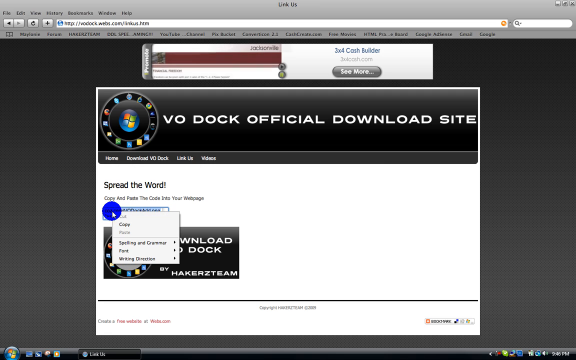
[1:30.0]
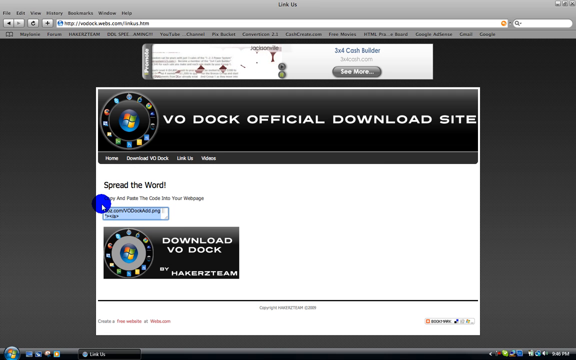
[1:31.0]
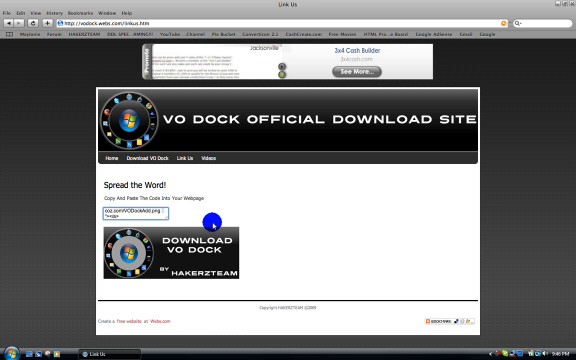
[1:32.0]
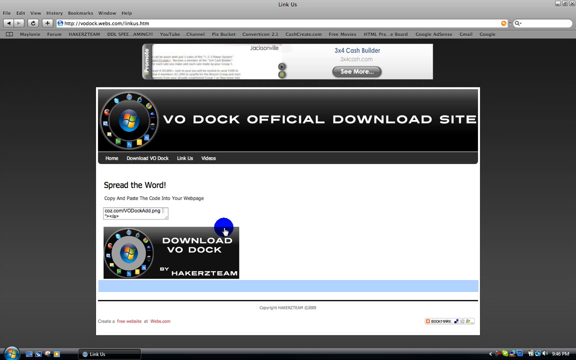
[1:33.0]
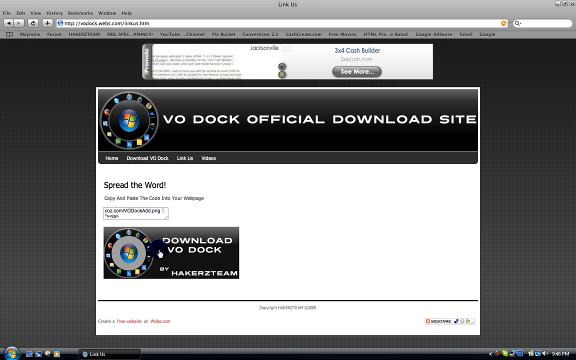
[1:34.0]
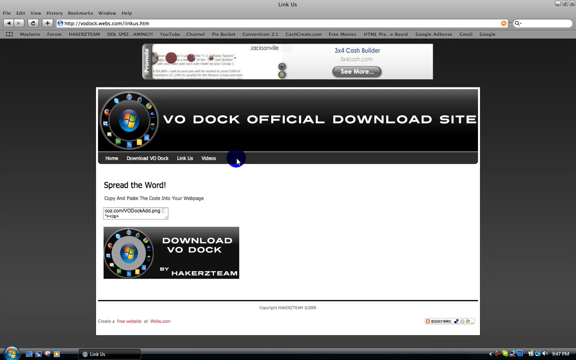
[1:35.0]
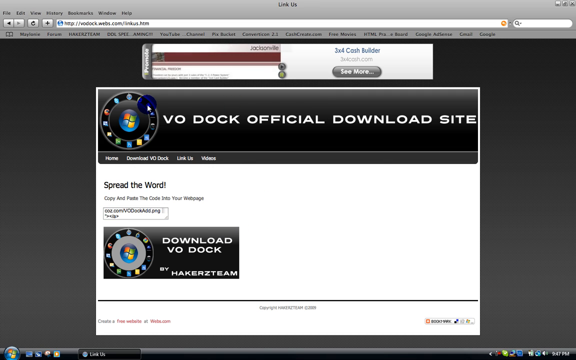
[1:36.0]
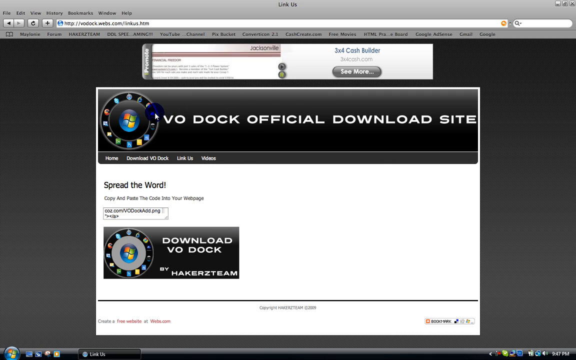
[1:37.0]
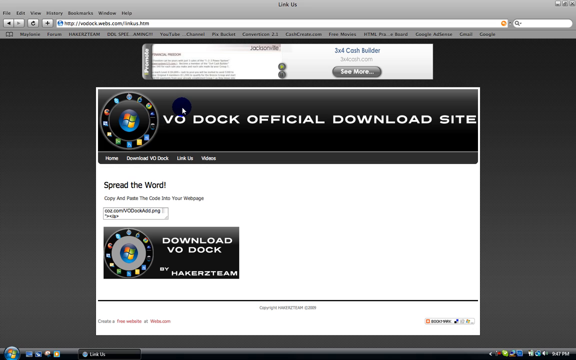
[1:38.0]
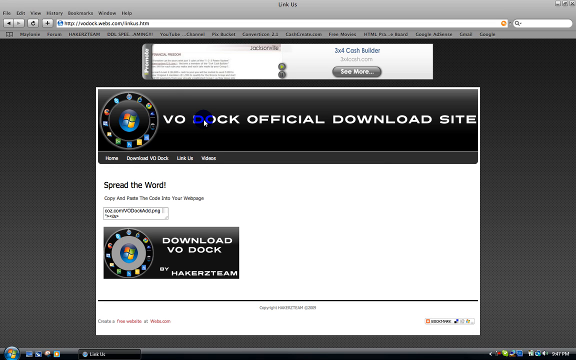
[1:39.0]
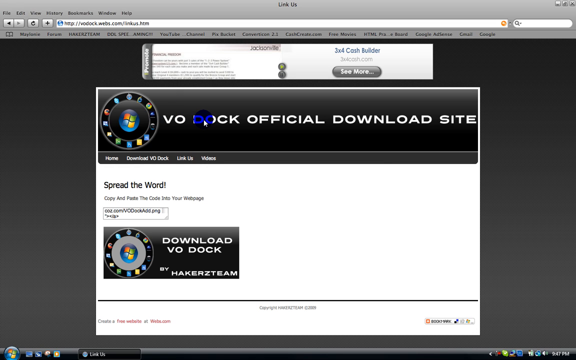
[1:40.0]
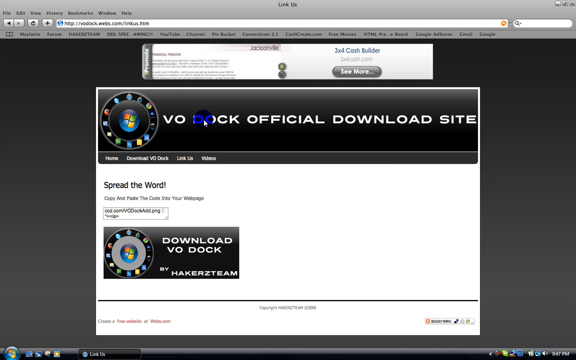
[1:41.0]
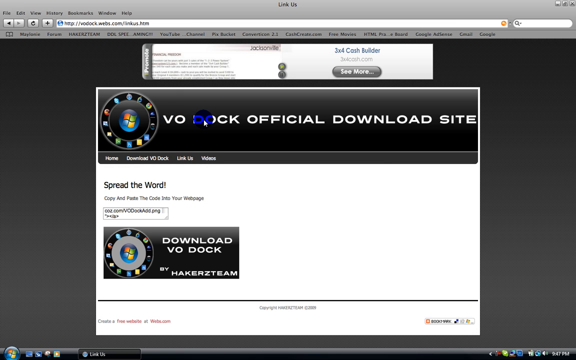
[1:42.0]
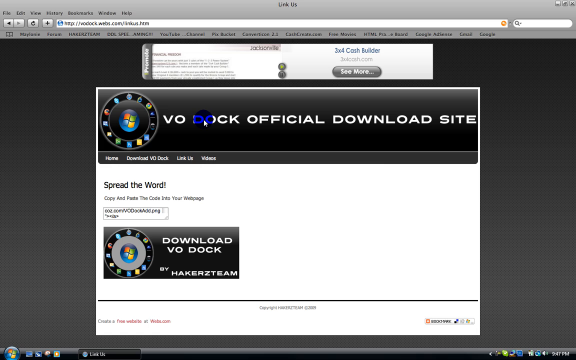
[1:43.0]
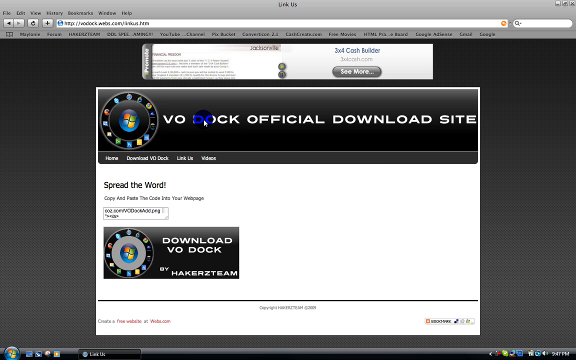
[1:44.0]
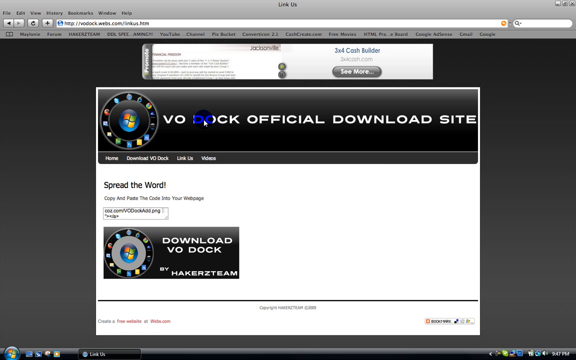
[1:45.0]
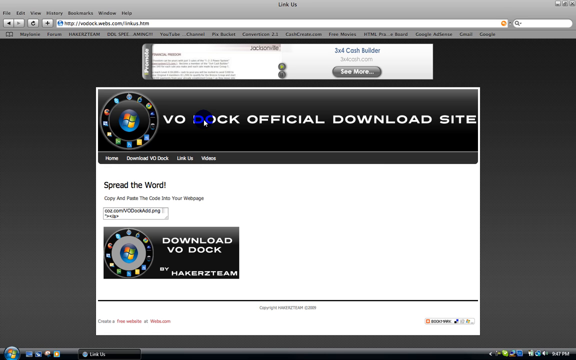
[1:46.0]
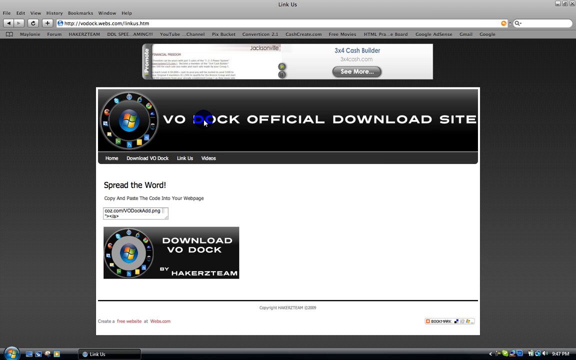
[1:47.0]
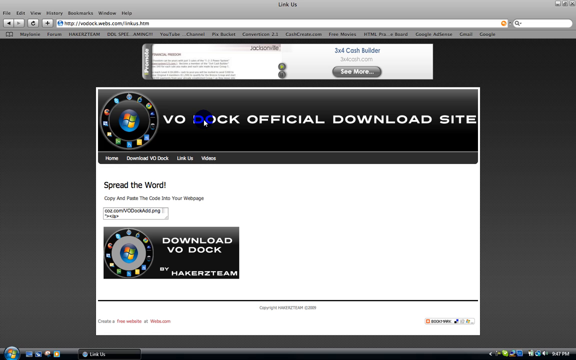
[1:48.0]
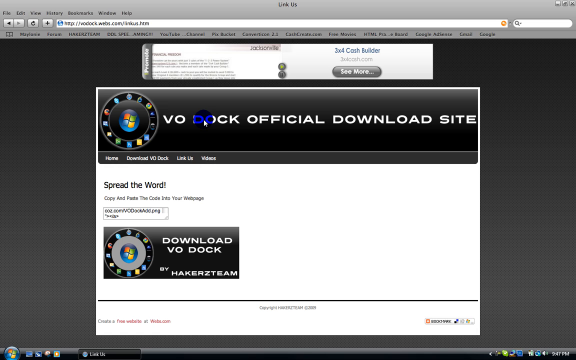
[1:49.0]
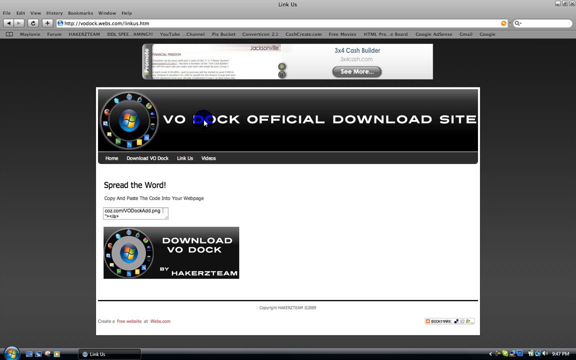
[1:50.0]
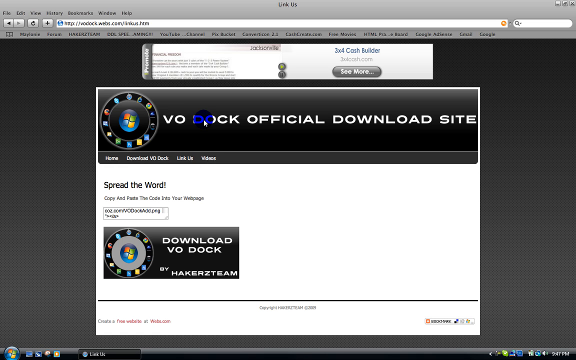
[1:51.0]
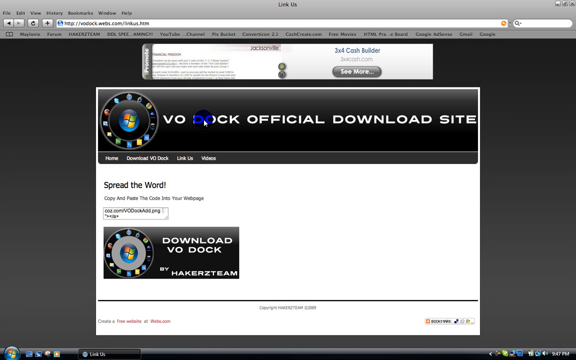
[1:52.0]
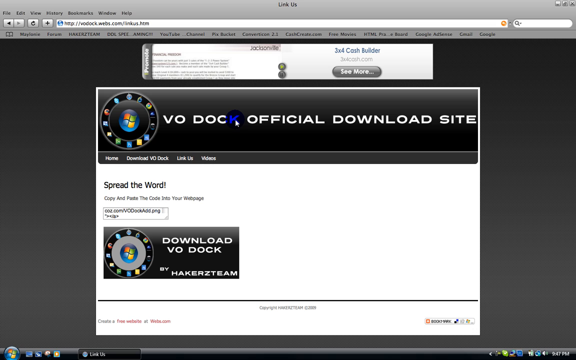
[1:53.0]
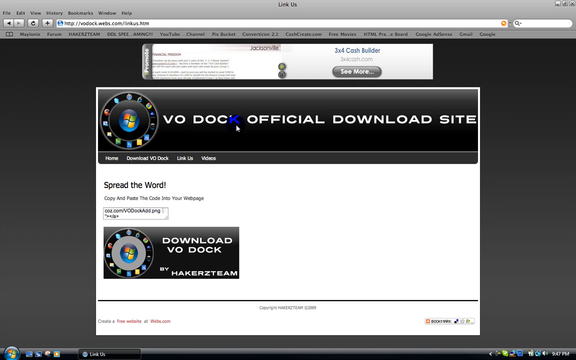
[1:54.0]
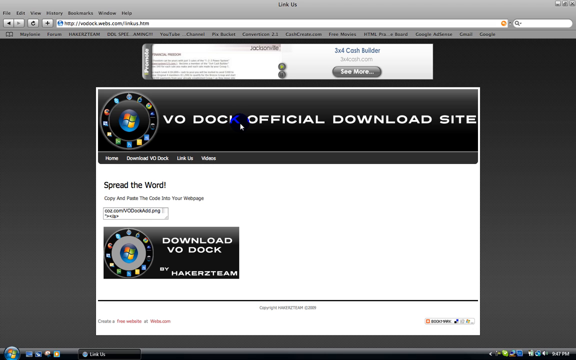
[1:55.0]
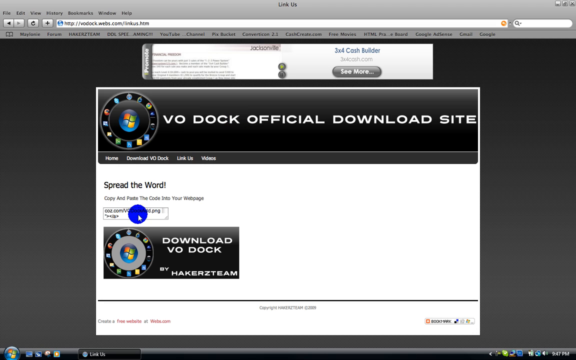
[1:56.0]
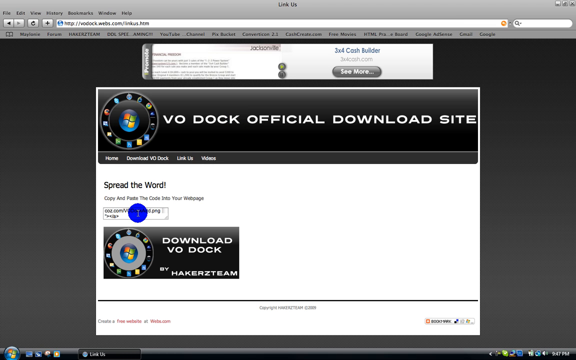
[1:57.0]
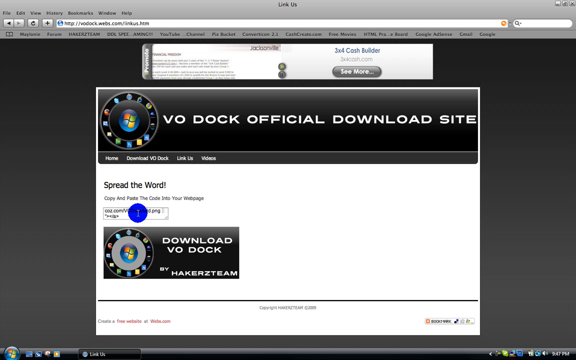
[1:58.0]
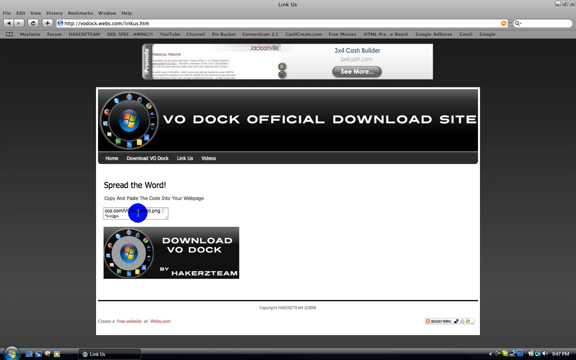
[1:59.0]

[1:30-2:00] The VO Dock official download site is open in Safari on the laptop screen. The page has the header "VO DOCK official download site" in white capitals on a black background, with the Windows icon surrounded by various apps to its left. Below it is a header tab with multiple options such as "home" and "links". Below that, "spread the word" is written in big bold letters, followed by a box containing a code, and below the box is a "download VO Dock" option on a black background with the Windows logo on its left. A pointer with a blue circle first hovers over the main header and stays there for a few seconds. The pointer then moves to the box with the code, which is selected, indicated by a light blue selection. A dialog box opens and copy is selected from it. The mouse goes back to the main header and hovers around it. An ad video is running above the web page.